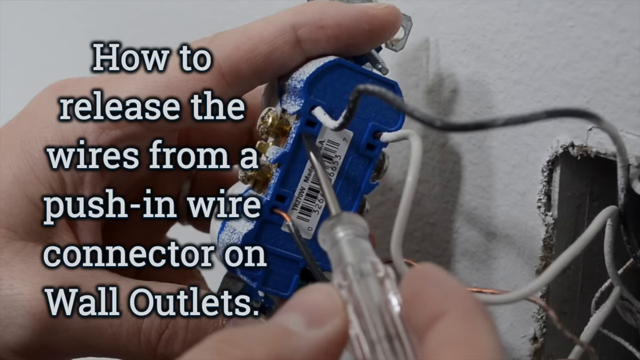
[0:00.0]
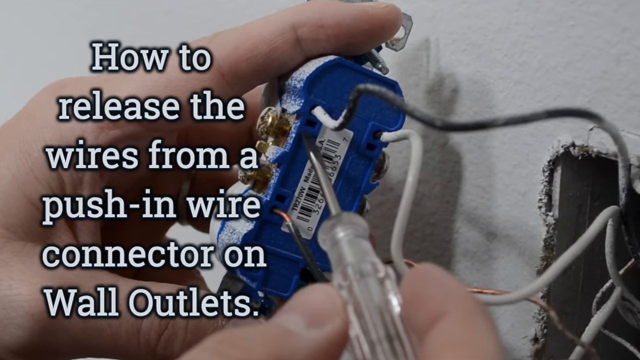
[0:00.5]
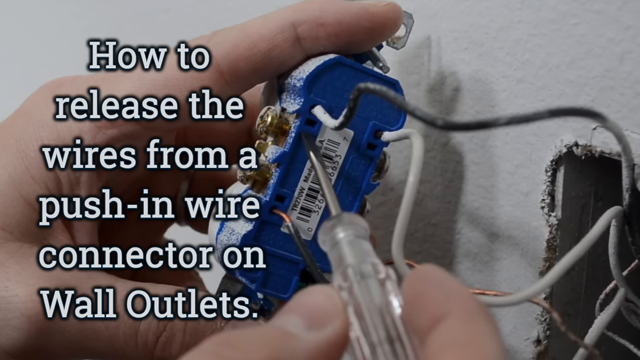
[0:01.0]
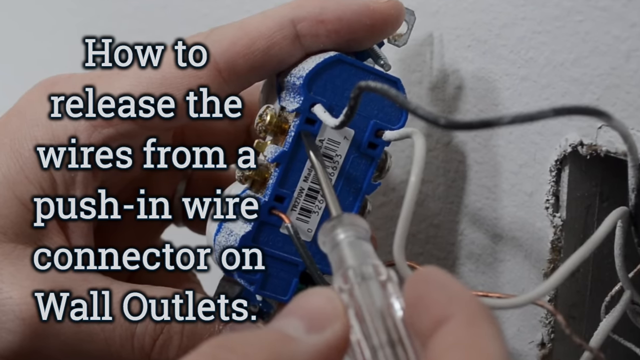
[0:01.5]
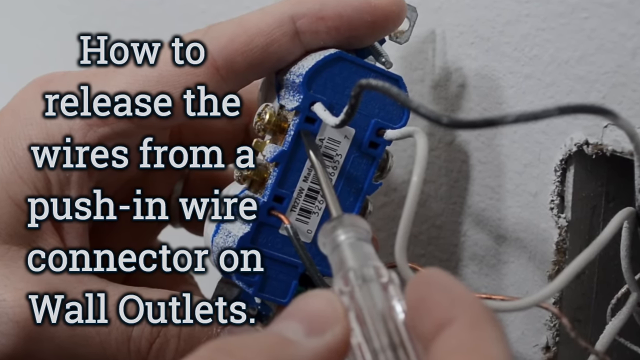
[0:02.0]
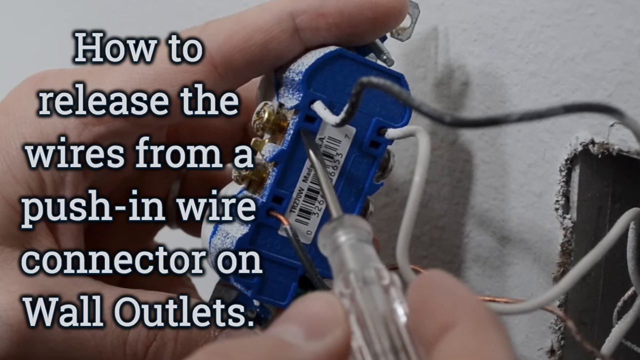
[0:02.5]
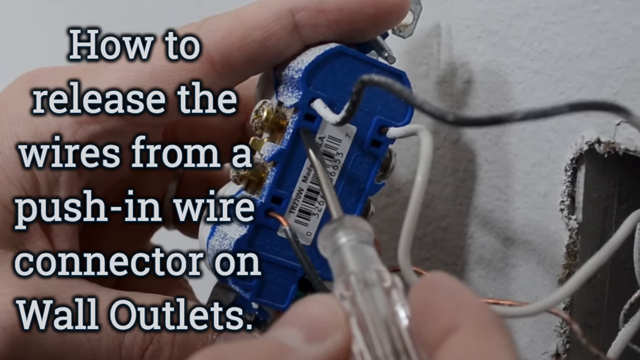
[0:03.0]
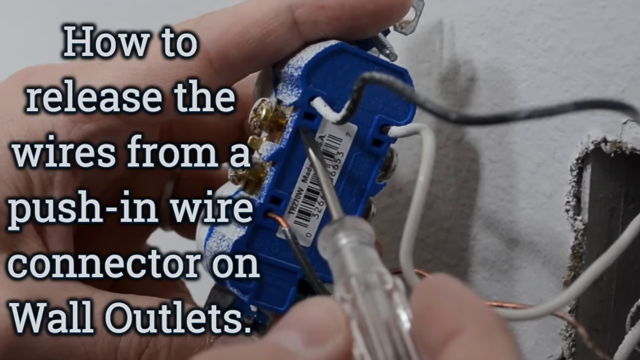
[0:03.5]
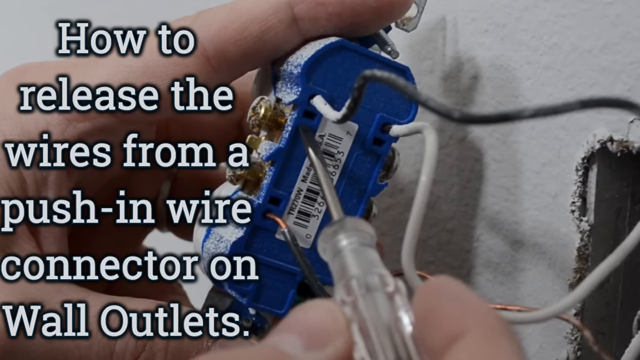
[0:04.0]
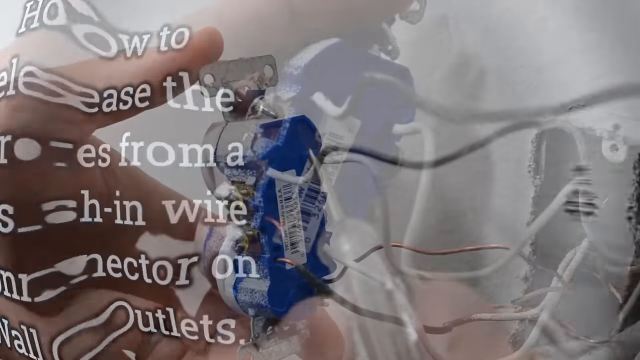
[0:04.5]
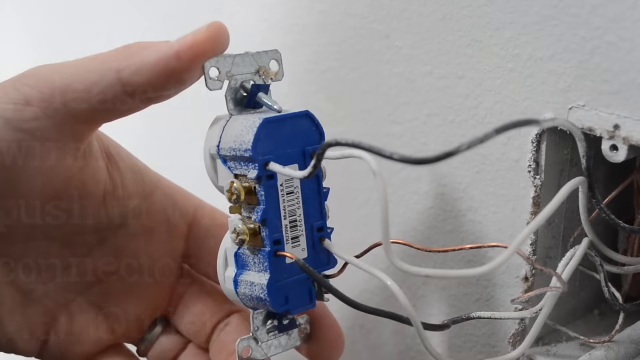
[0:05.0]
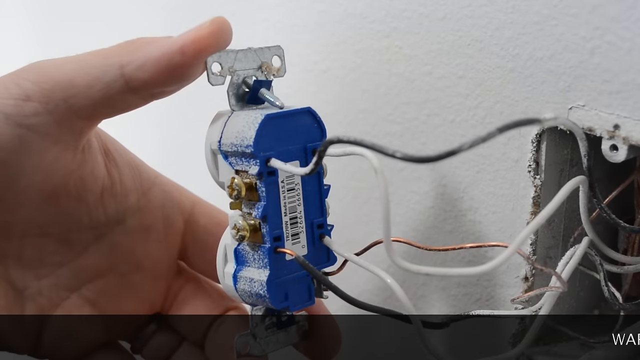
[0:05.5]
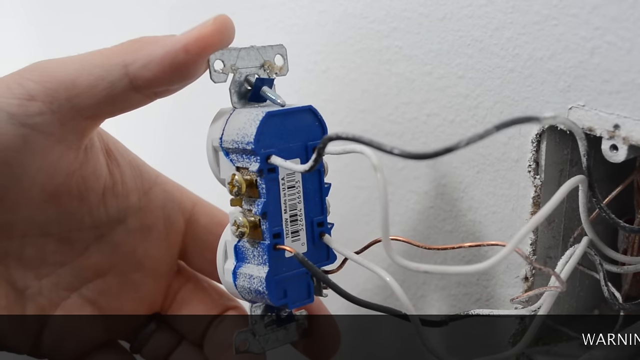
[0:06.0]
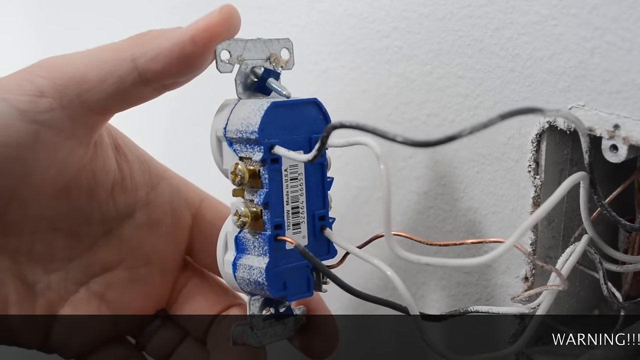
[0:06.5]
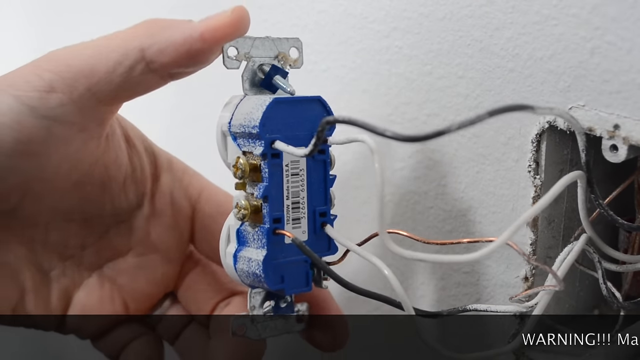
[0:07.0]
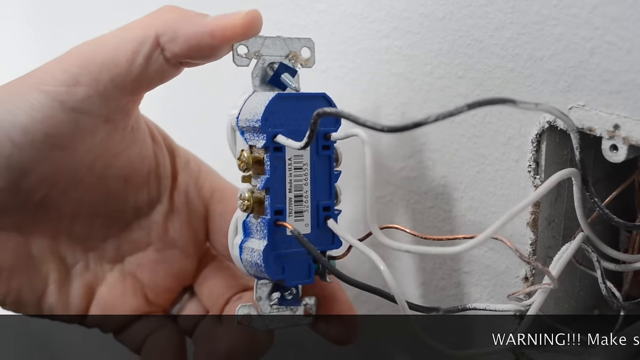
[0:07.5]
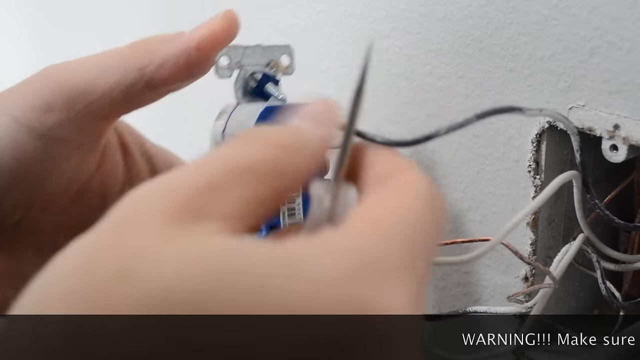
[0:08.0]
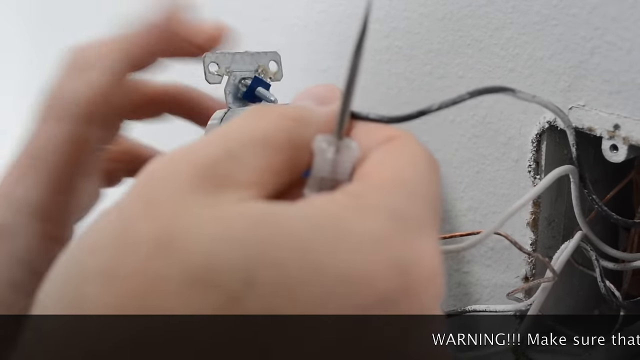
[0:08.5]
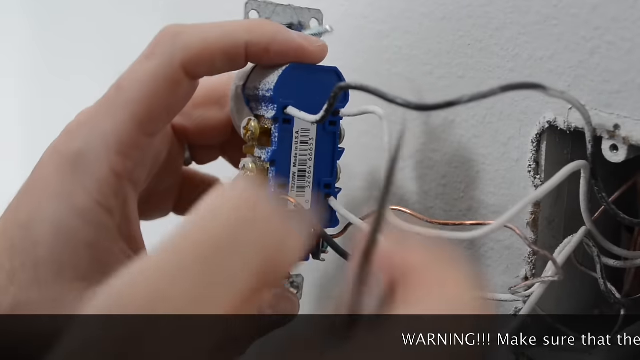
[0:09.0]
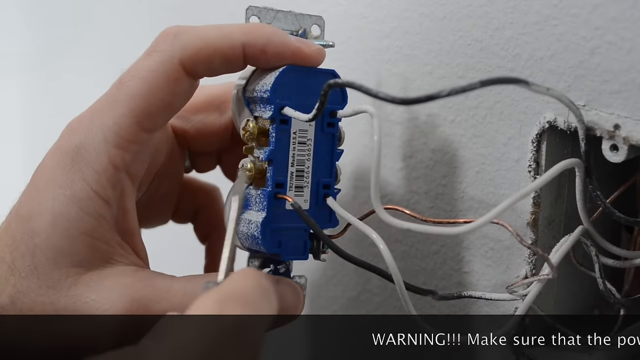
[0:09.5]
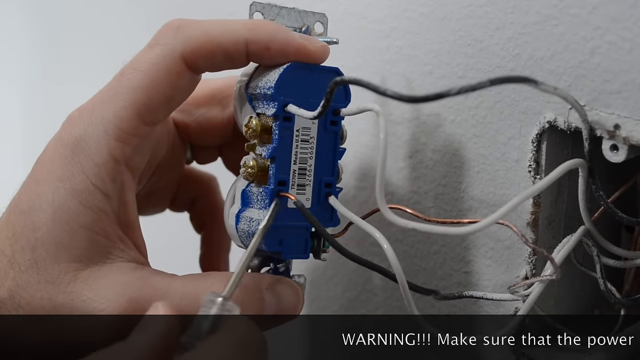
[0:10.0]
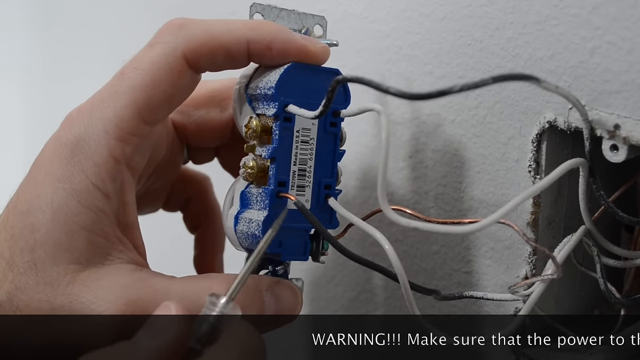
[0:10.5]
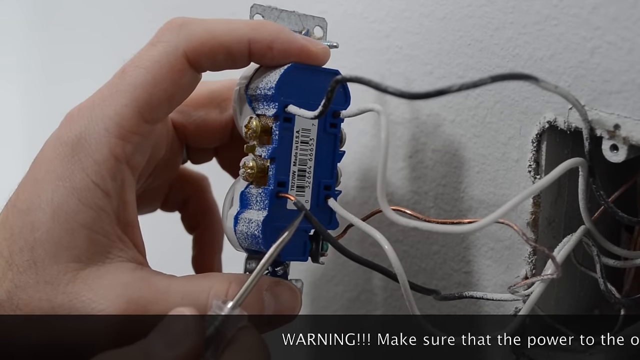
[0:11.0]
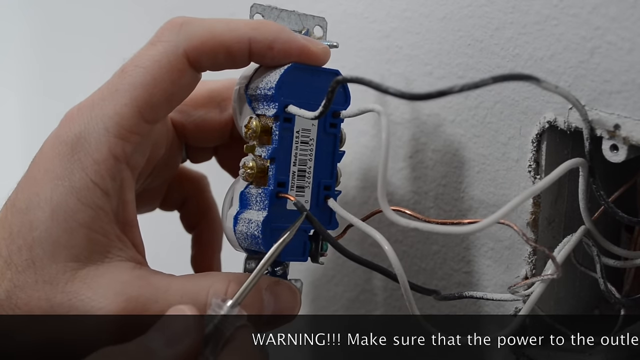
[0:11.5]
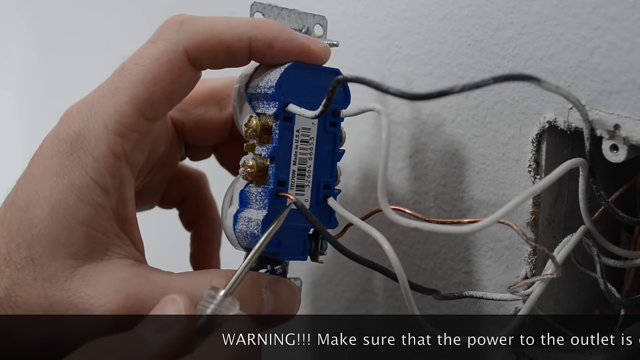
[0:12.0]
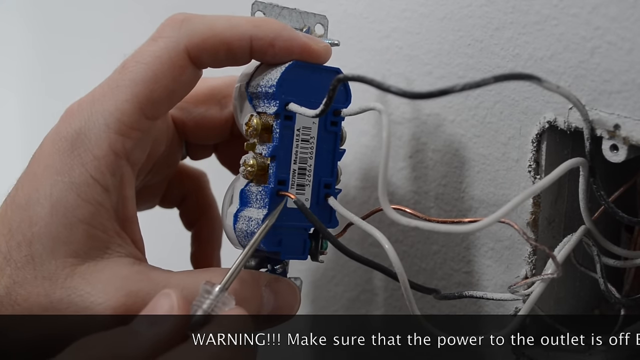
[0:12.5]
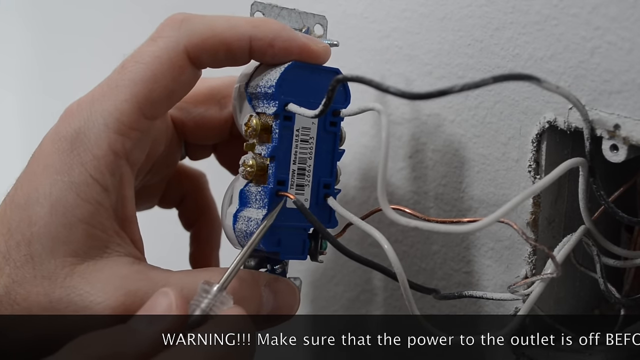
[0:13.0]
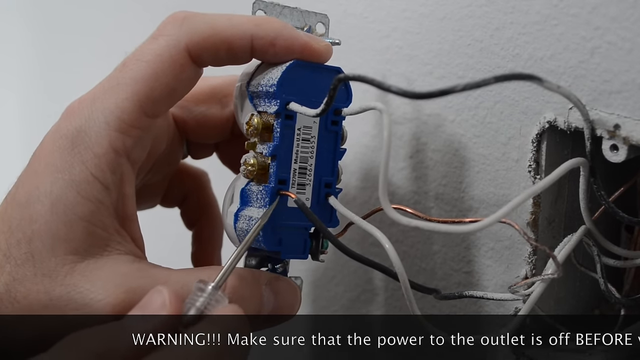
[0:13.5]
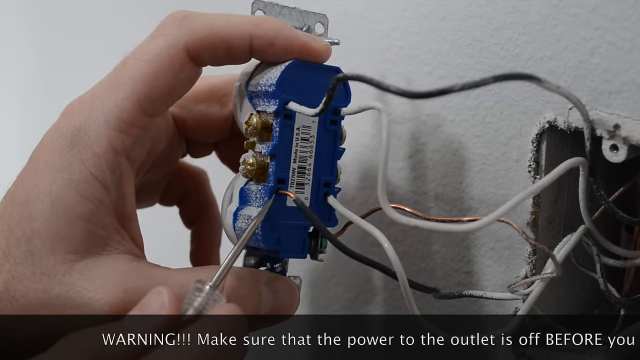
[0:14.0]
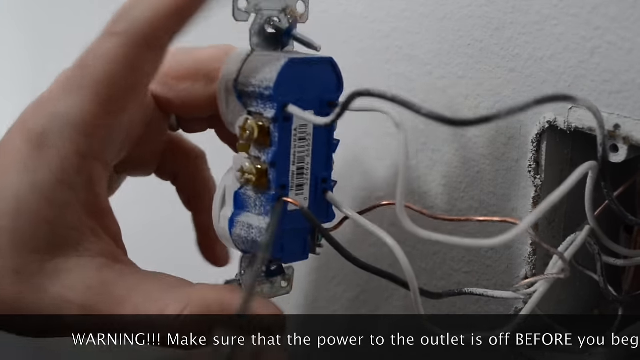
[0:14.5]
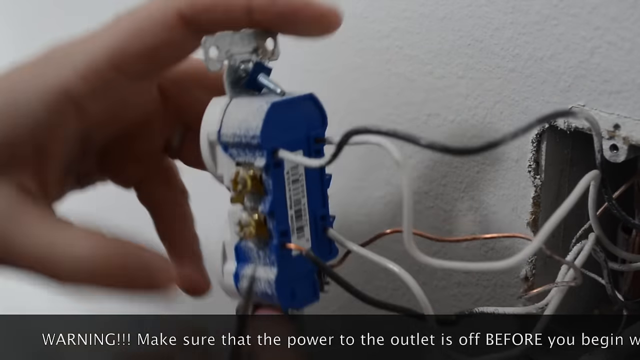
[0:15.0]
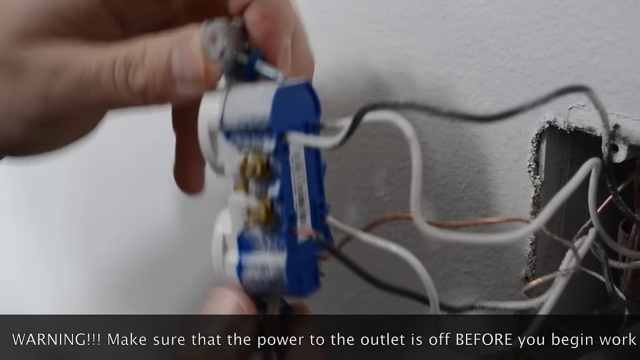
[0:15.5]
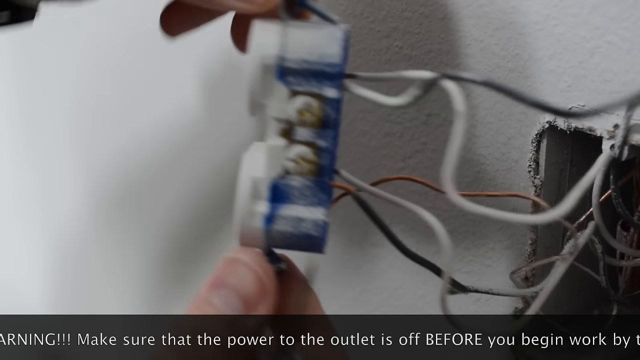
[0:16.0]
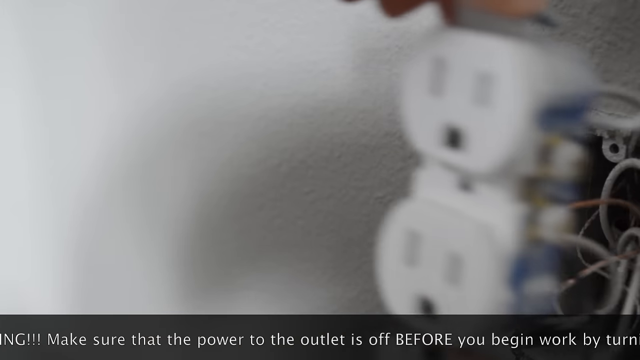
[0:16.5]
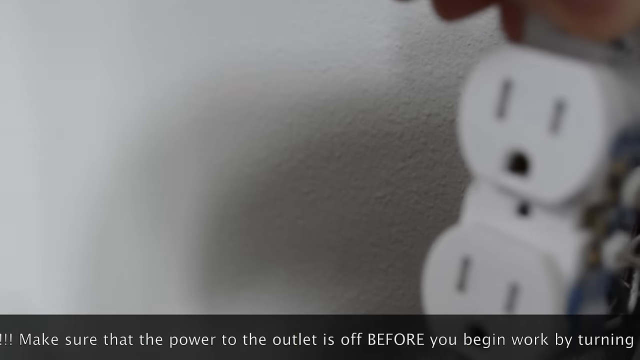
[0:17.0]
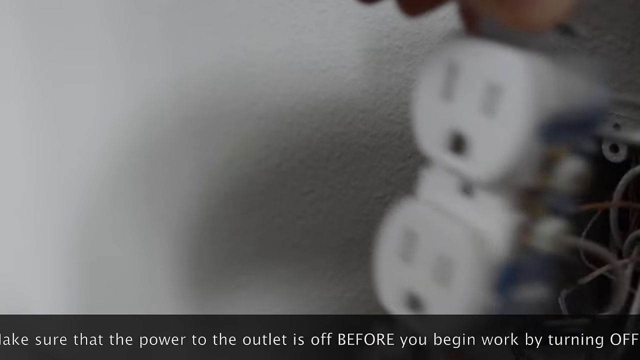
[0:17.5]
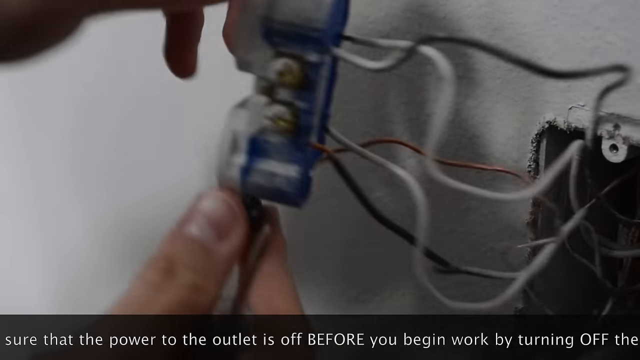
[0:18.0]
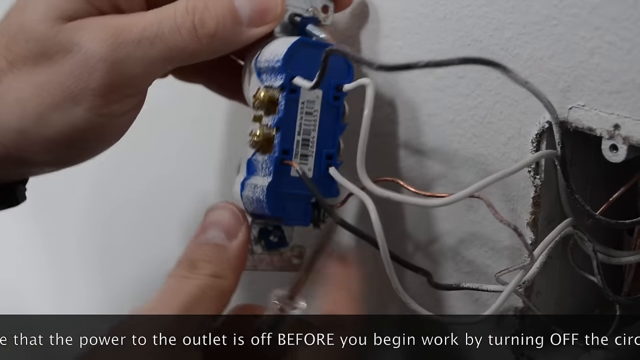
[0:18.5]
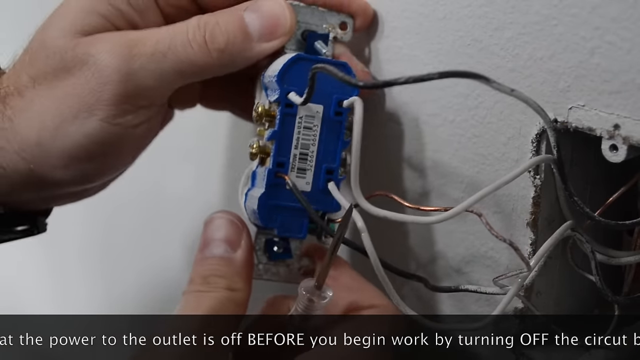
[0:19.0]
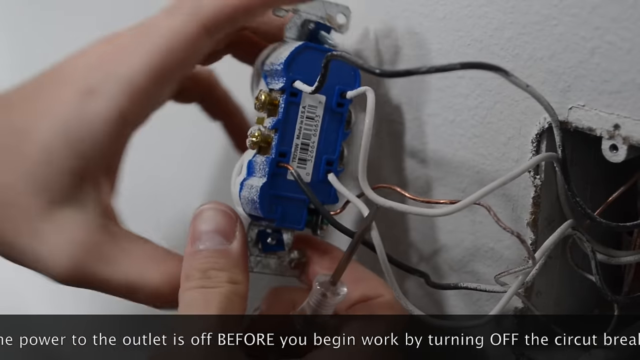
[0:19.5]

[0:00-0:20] A man holds a device that looks like a machine, with wires attached to it, and on-screen text reads "how to release the wires from a push in wire connector on wall outlets." He begins showing how it is done. Beneath, a warning appears: "make sure that the power to the outlet is off before you begin working by turning off the circuit breakers."